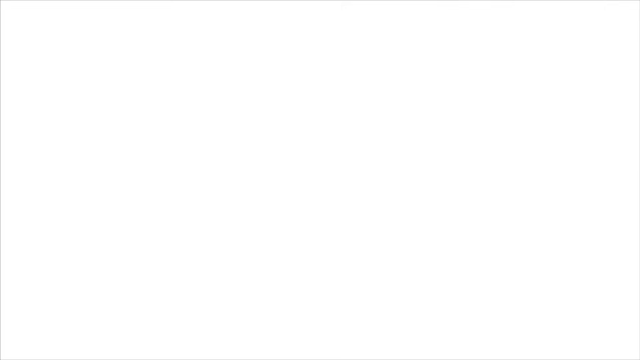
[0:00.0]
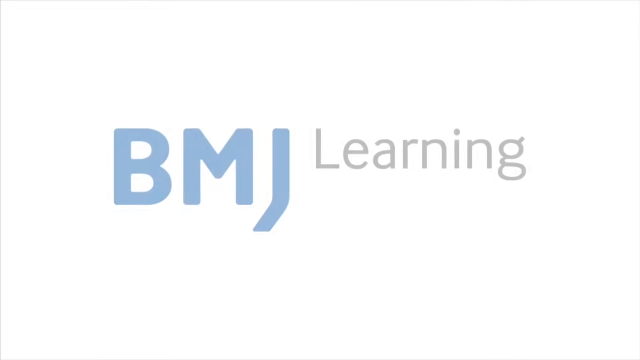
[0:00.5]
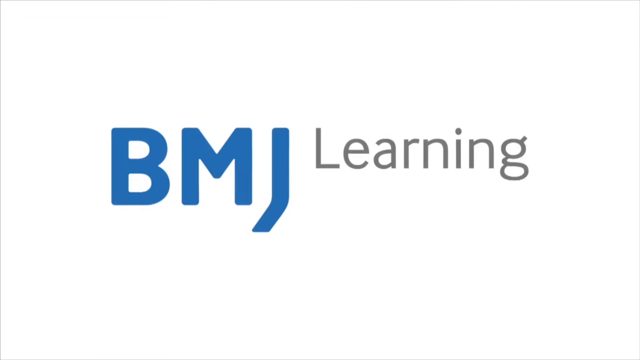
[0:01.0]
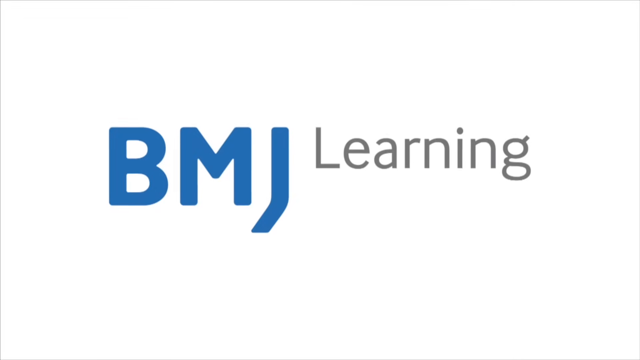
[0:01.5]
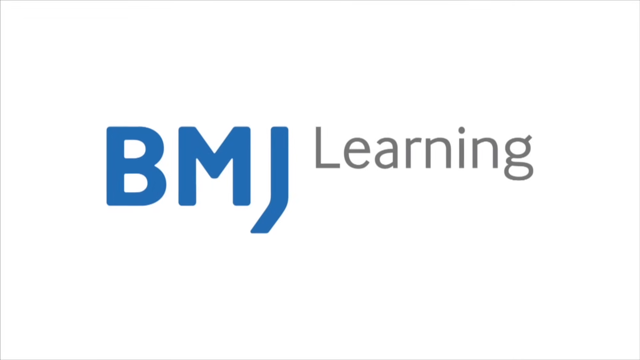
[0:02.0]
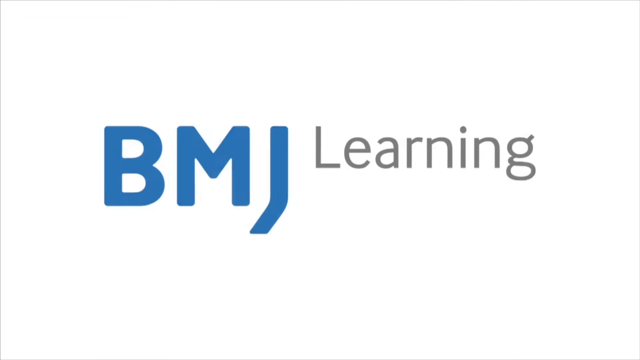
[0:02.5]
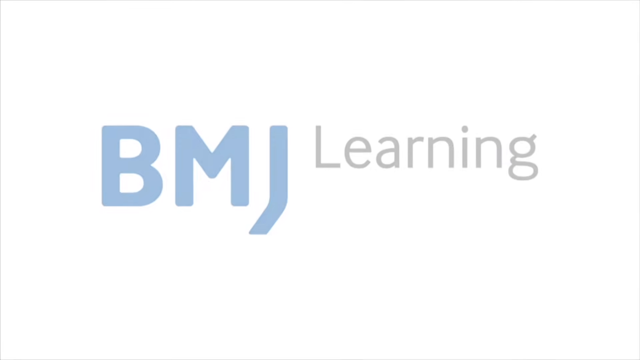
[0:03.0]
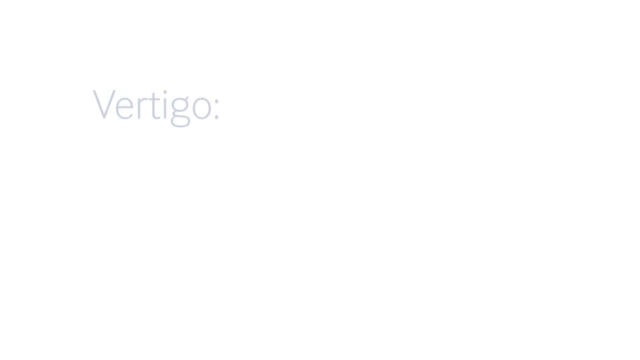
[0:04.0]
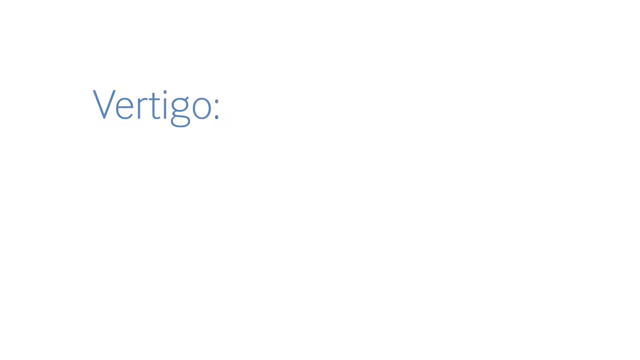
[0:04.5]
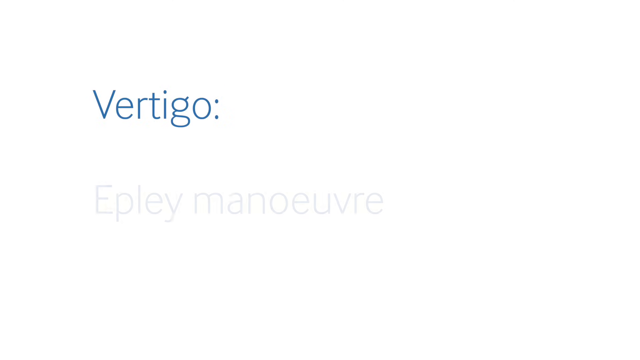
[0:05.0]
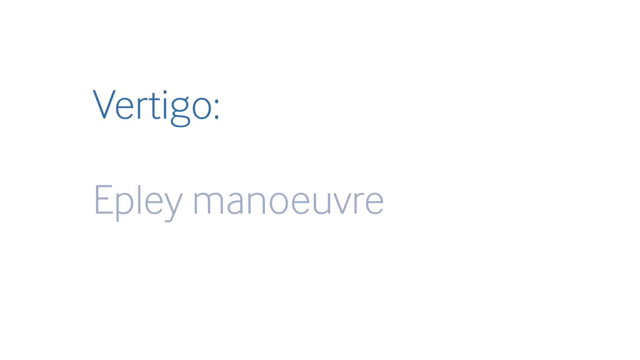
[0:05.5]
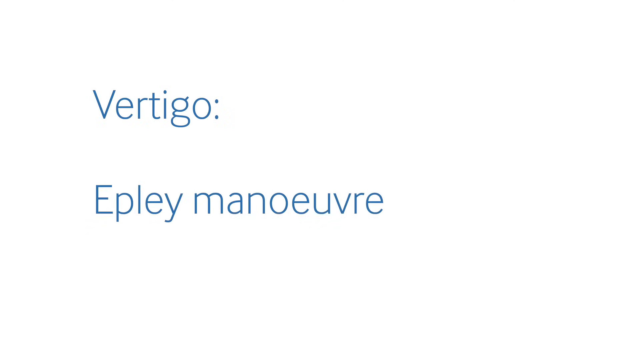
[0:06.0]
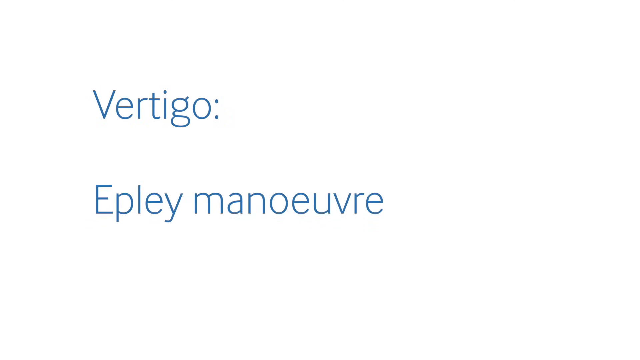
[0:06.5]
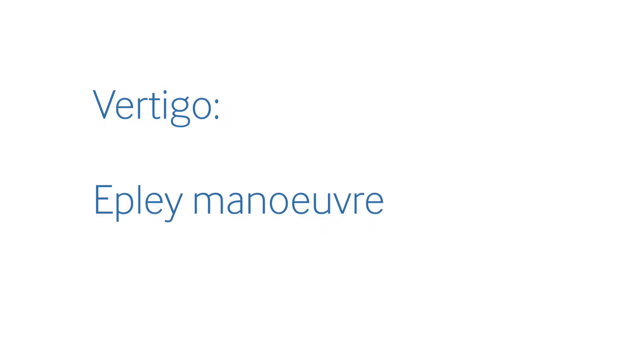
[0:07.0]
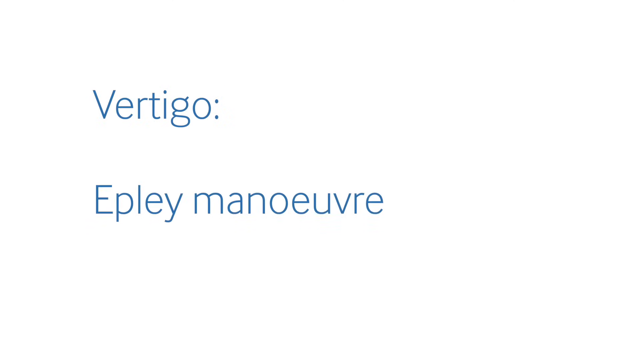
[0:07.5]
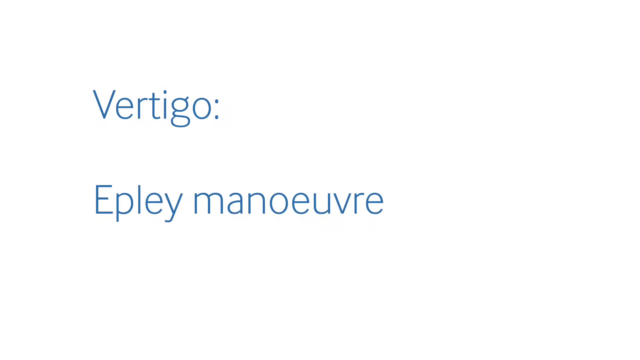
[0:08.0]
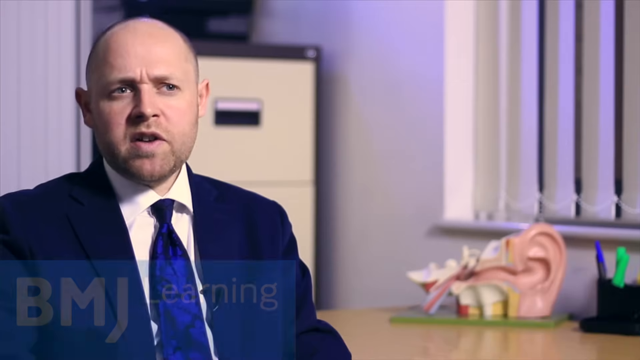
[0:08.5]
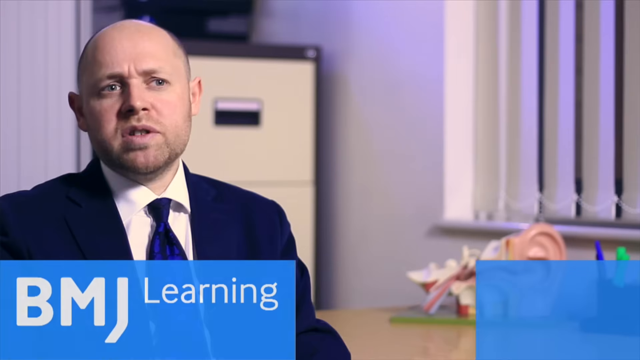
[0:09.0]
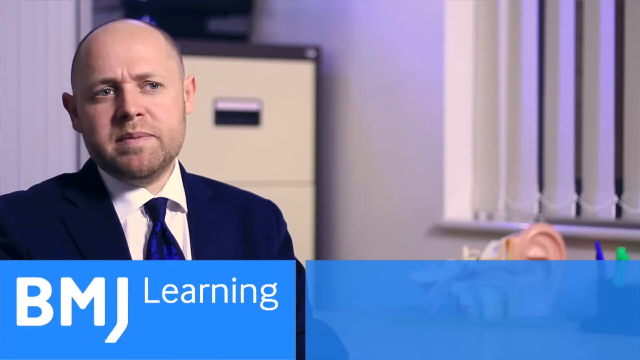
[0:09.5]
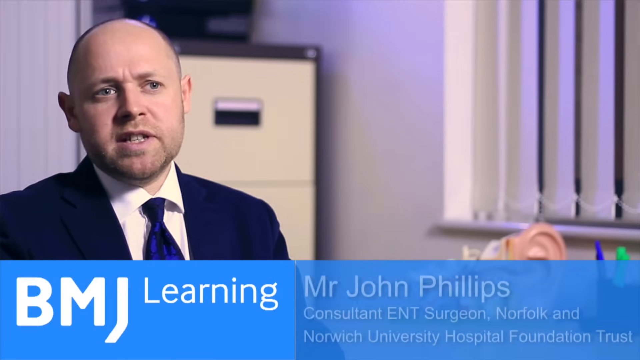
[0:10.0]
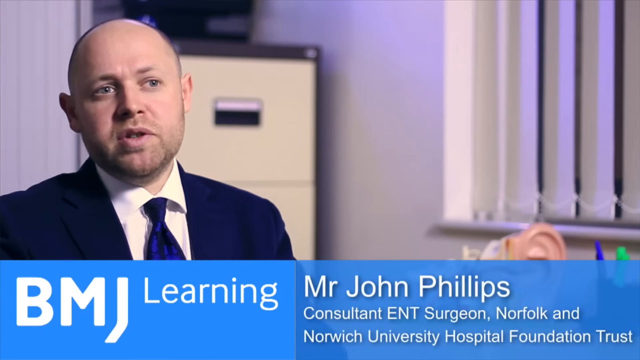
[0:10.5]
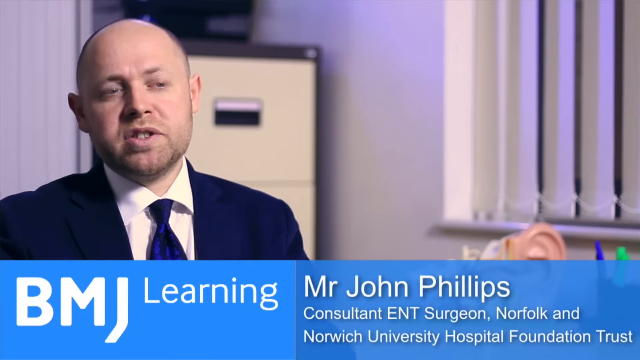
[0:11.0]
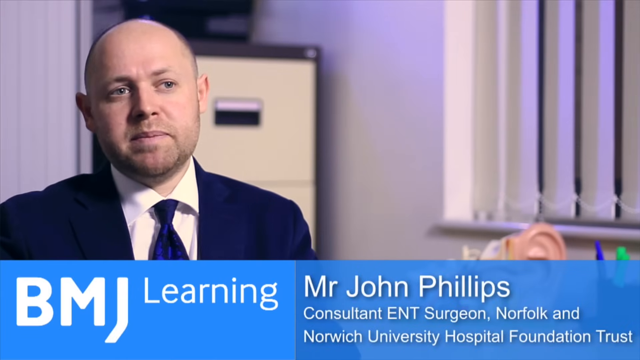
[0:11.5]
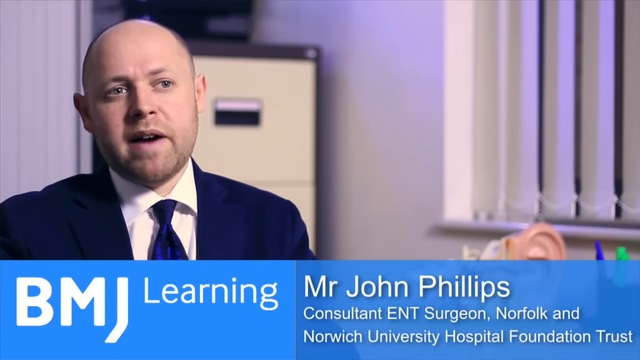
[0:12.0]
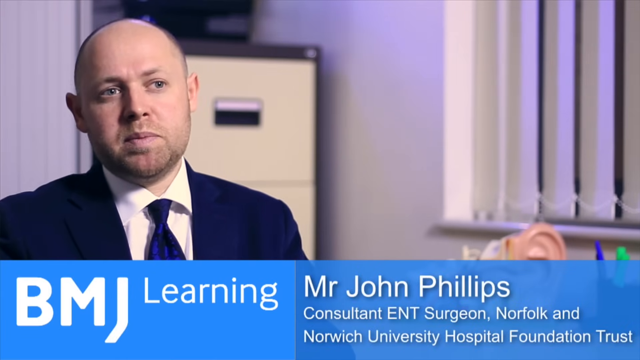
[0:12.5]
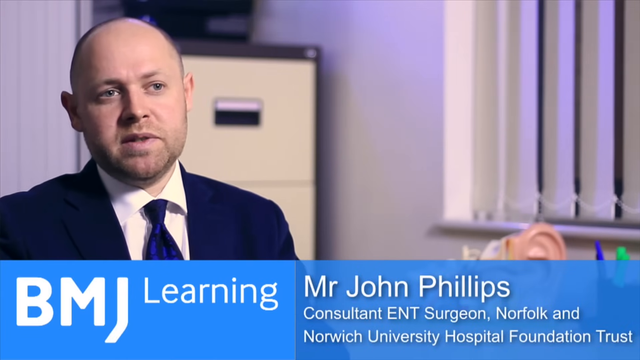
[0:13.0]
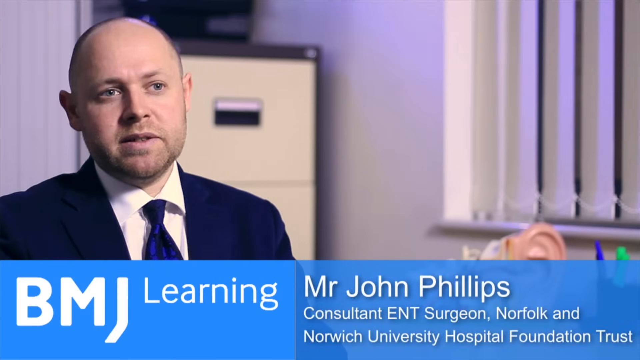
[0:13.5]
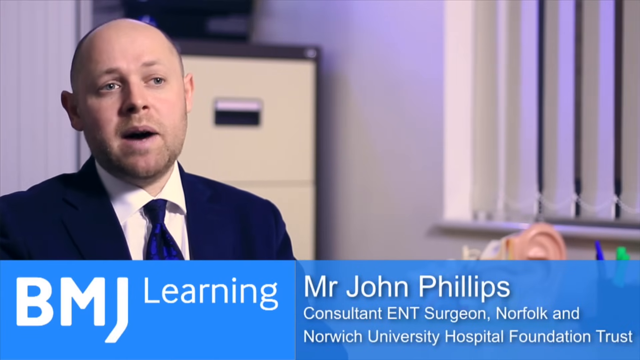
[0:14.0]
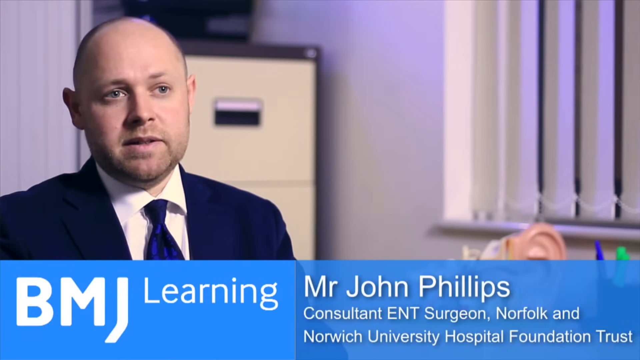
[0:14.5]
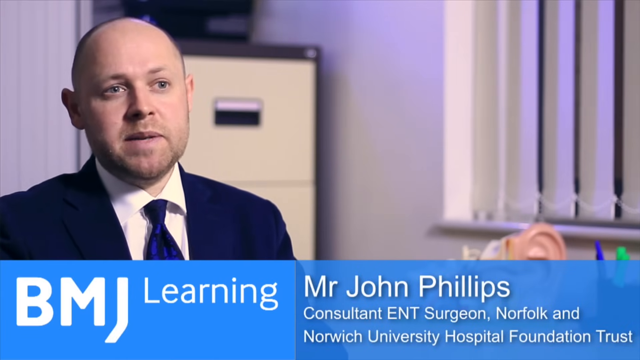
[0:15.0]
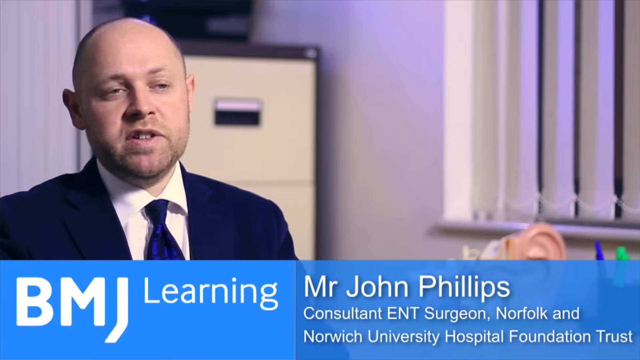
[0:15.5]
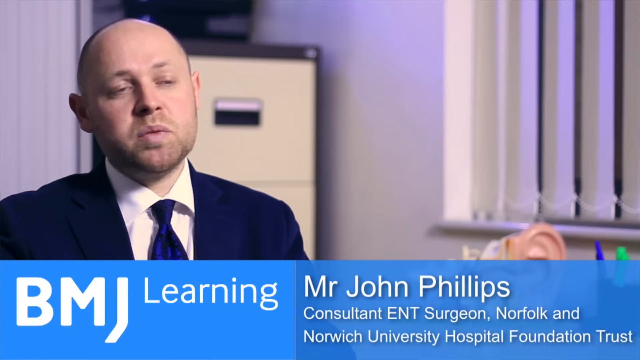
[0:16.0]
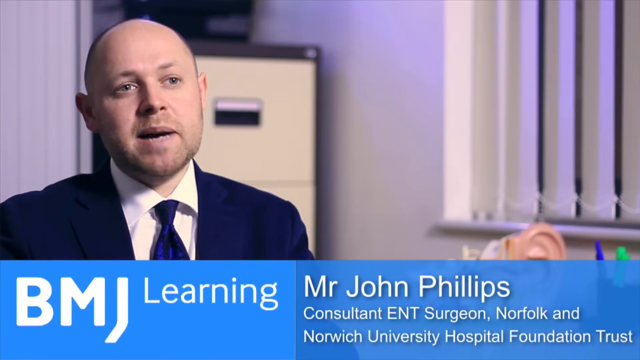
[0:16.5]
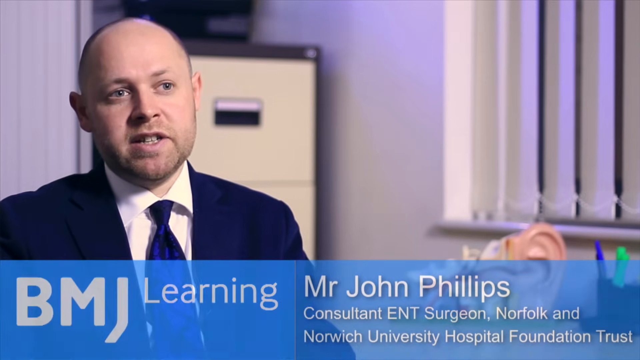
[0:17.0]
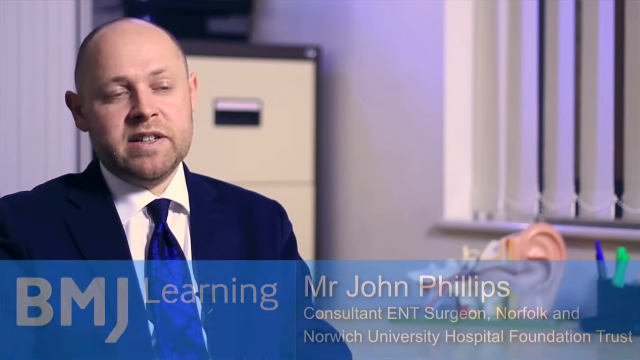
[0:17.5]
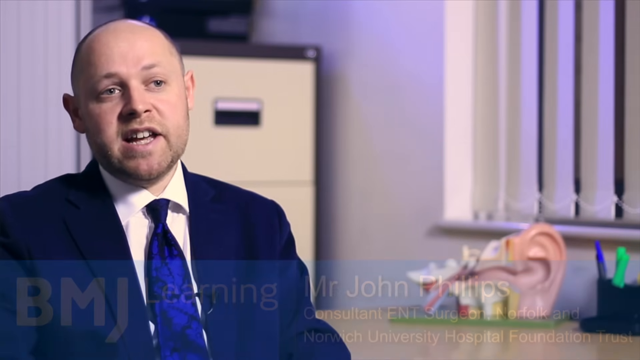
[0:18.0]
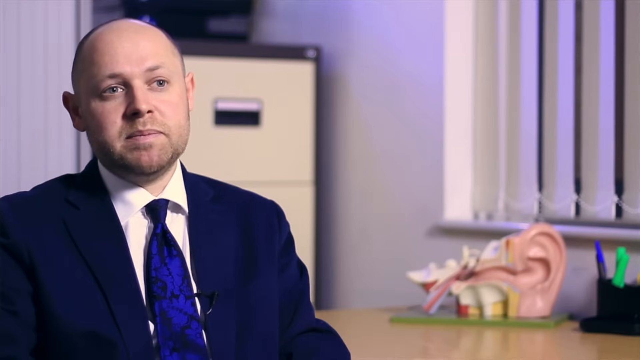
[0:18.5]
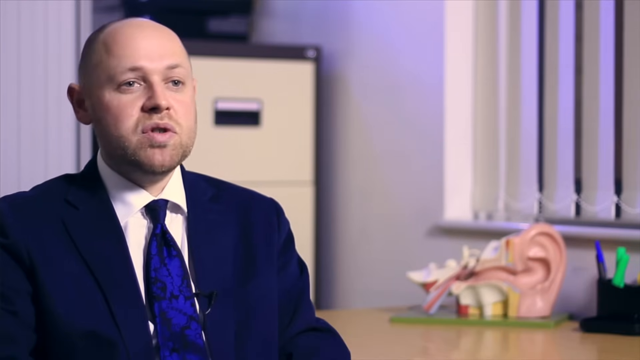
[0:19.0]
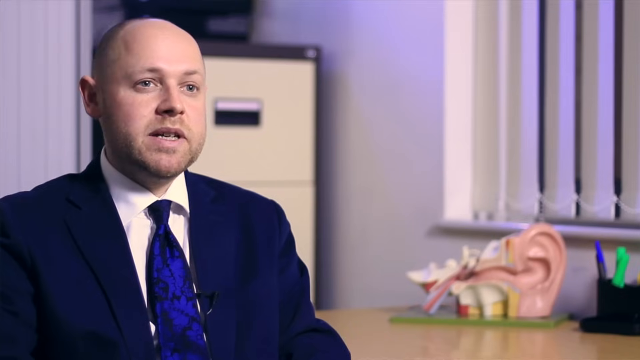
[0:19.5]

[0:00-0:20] The video opens on a title reading "BMJ Learning", with "BMJ" in blue text and "learning" in a light gray. It fades into the next scene, where blue text reads "Vertigo, Eppley Maneuver". Next, a man appears with a blue banner at the bottom that says "BMJ Learning, Mr. John Phillips, consultant, ENT surgeon". He wears a royal blue suit with a white shirt and a royal blue tie. Behind him is a filing cabinet, there is an anatomy of an ear, and there are blinds on the wall.